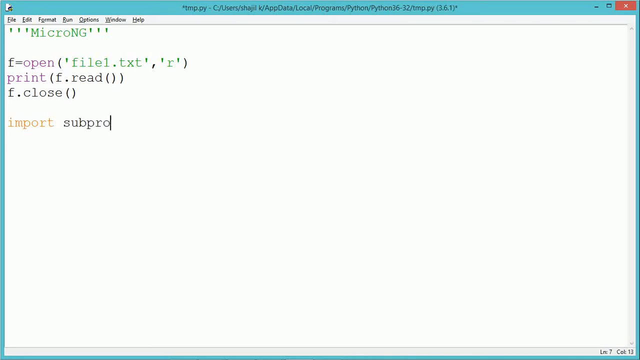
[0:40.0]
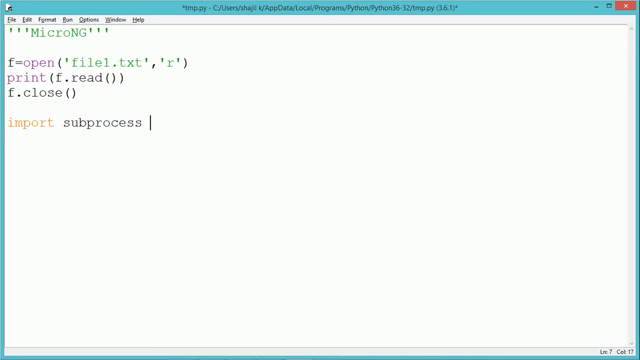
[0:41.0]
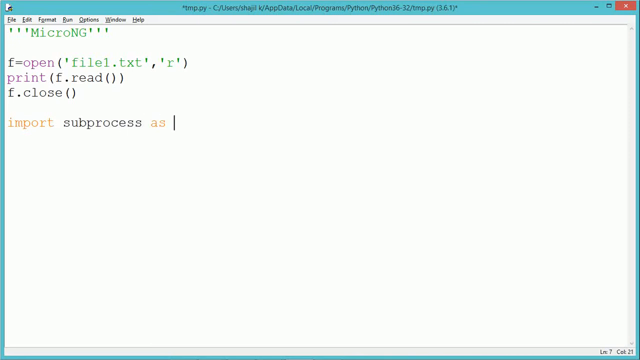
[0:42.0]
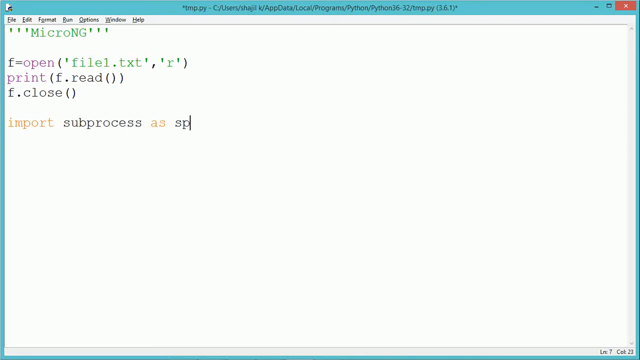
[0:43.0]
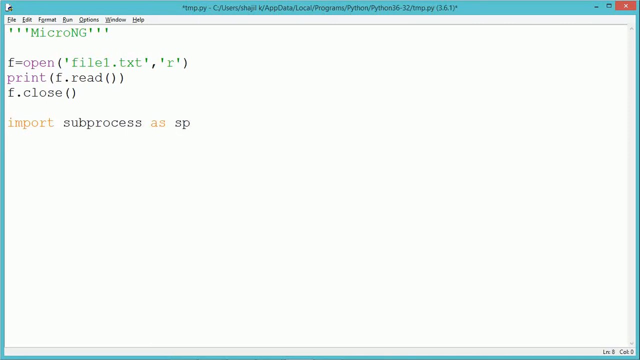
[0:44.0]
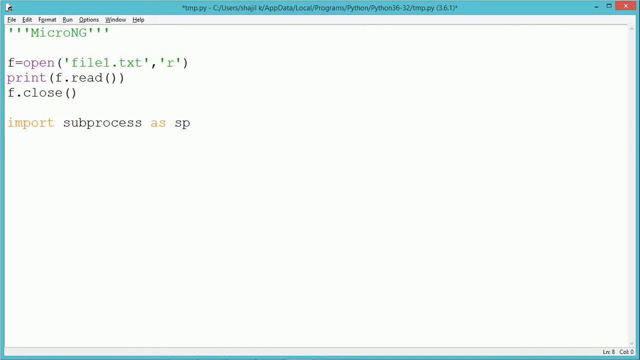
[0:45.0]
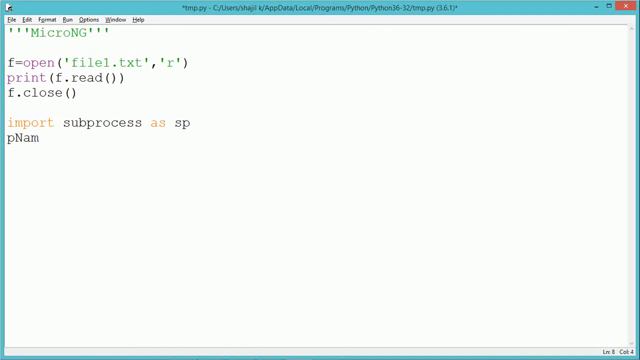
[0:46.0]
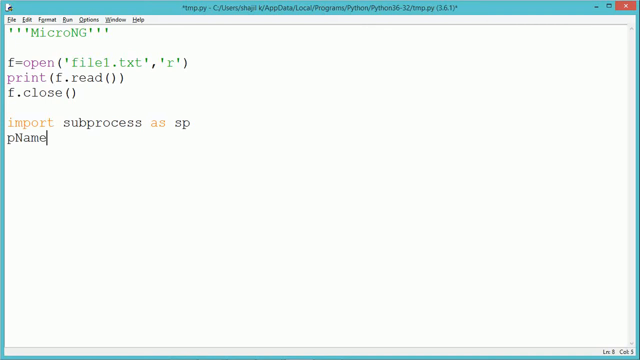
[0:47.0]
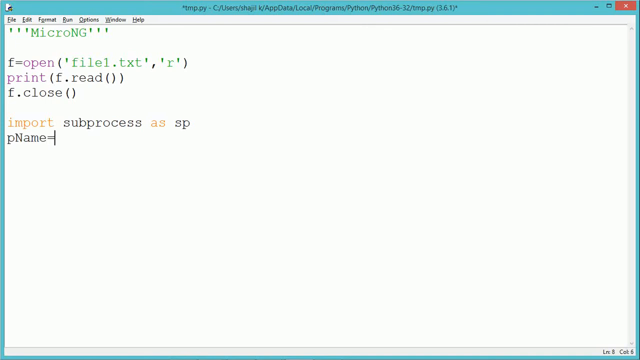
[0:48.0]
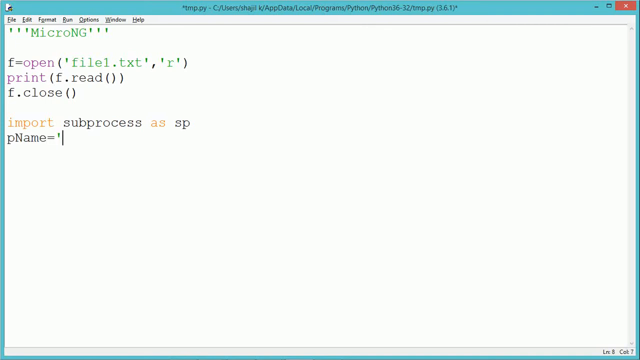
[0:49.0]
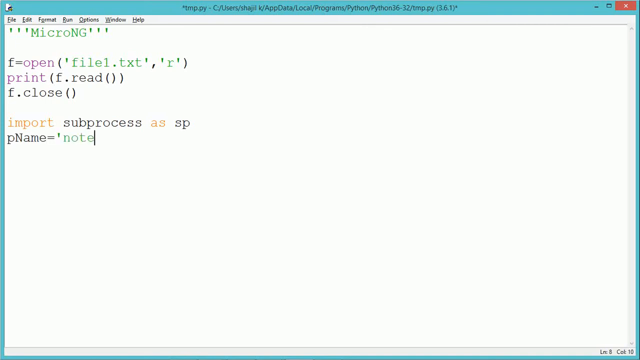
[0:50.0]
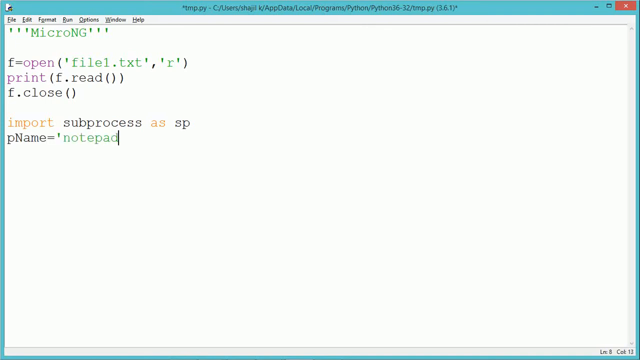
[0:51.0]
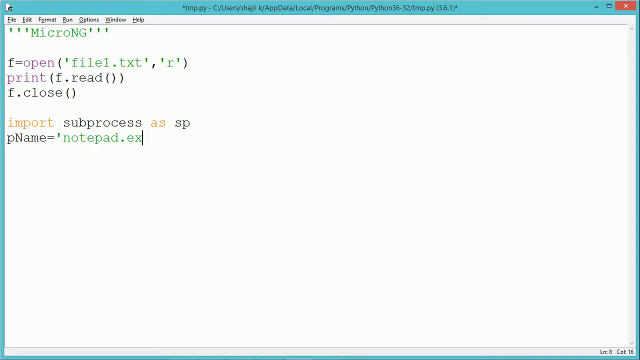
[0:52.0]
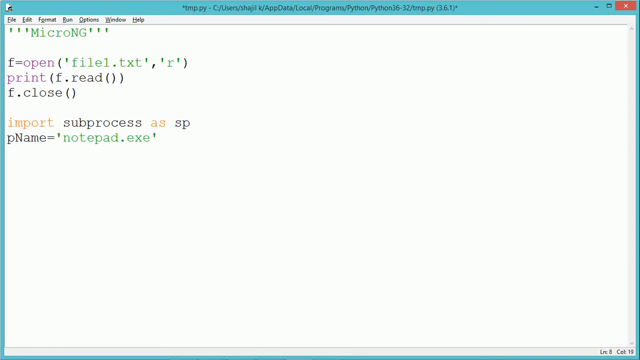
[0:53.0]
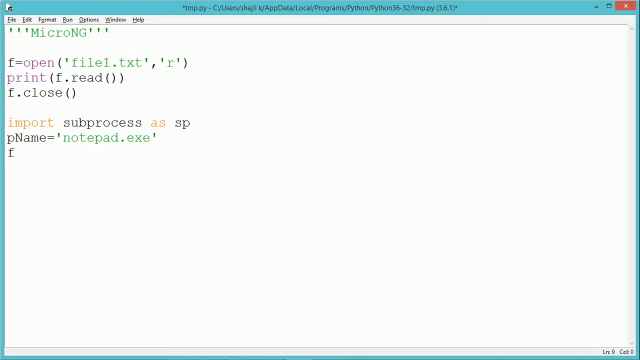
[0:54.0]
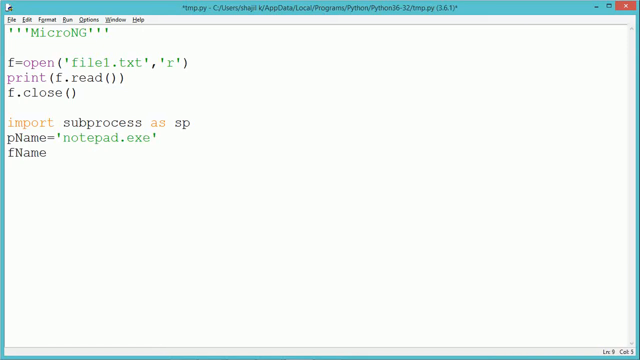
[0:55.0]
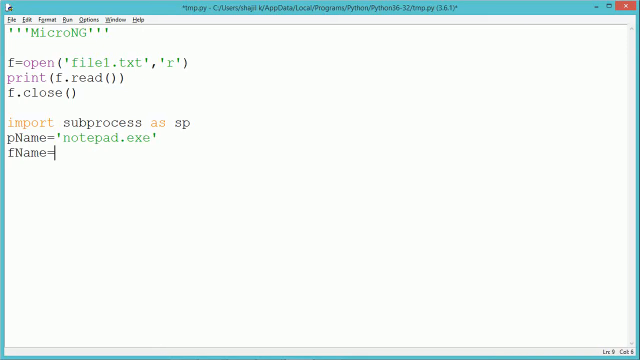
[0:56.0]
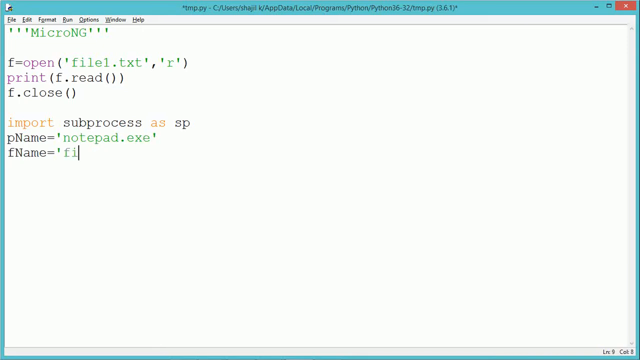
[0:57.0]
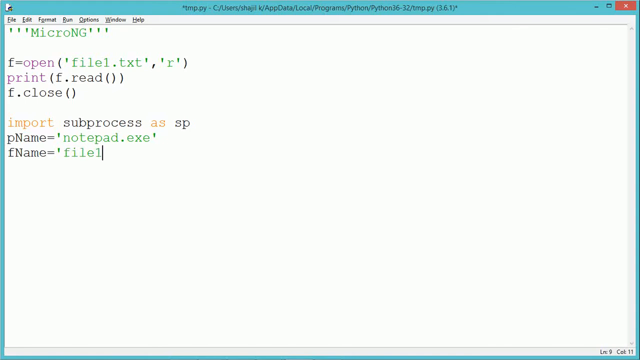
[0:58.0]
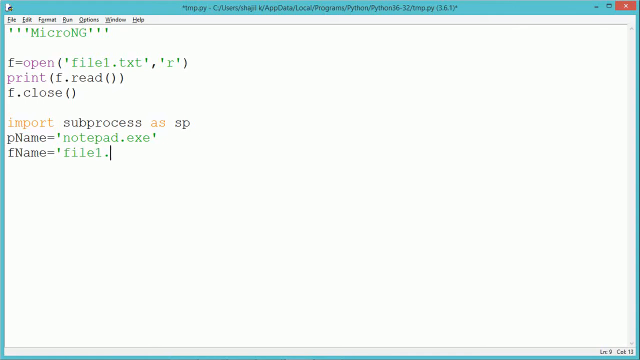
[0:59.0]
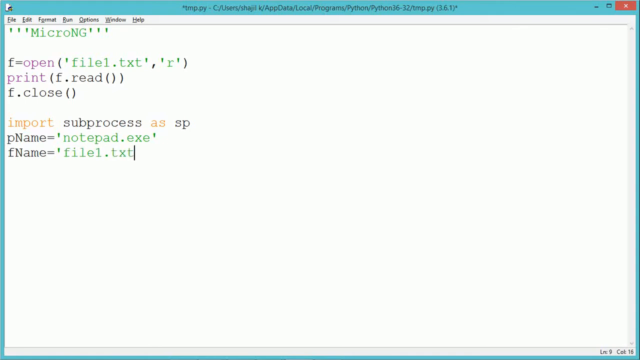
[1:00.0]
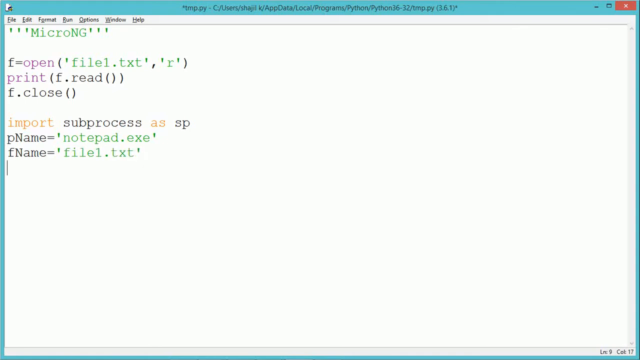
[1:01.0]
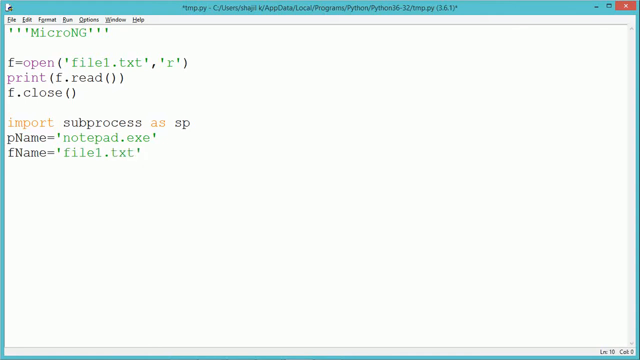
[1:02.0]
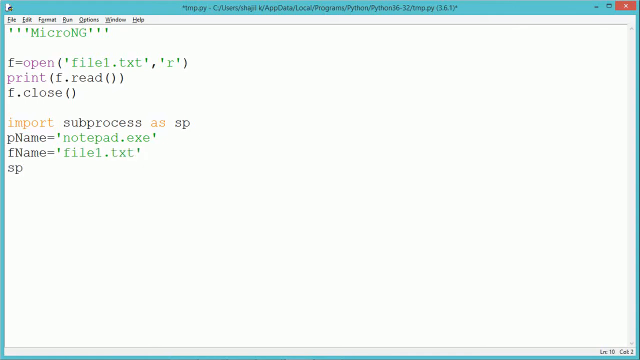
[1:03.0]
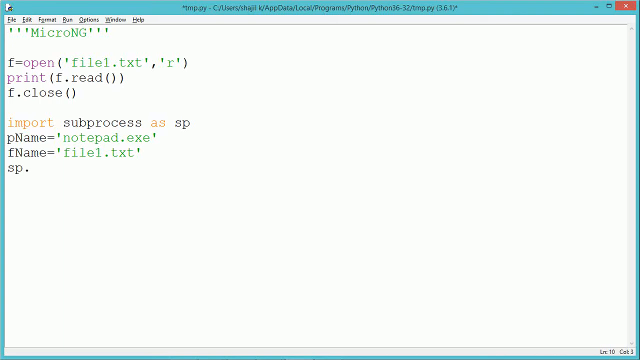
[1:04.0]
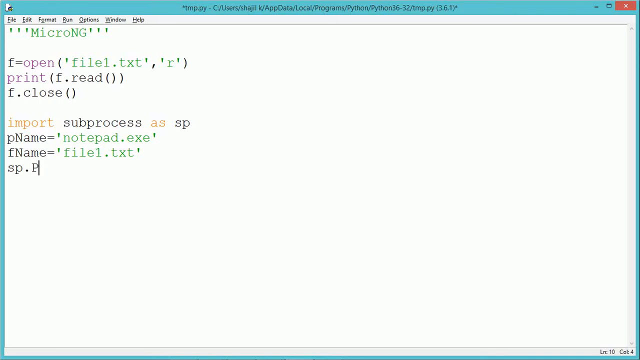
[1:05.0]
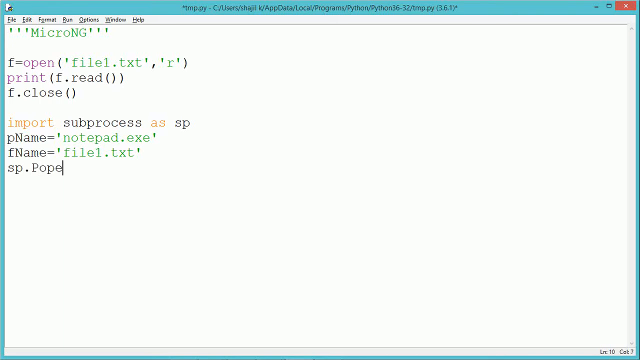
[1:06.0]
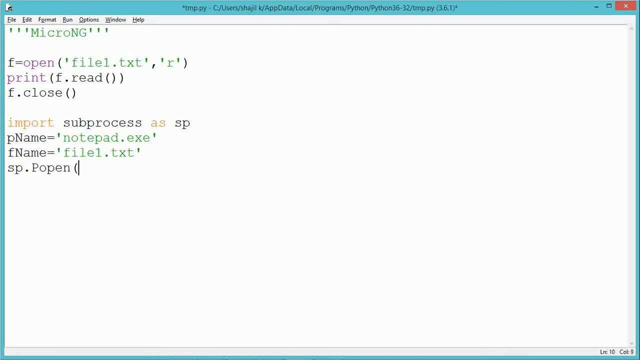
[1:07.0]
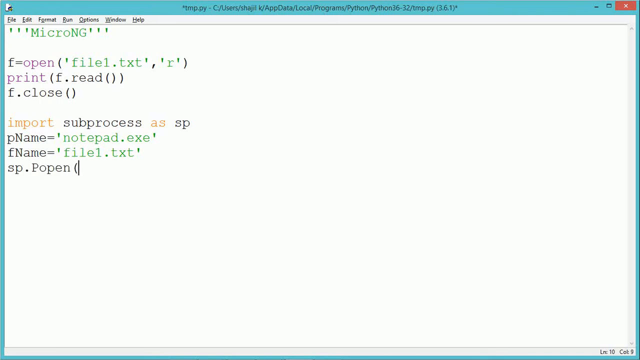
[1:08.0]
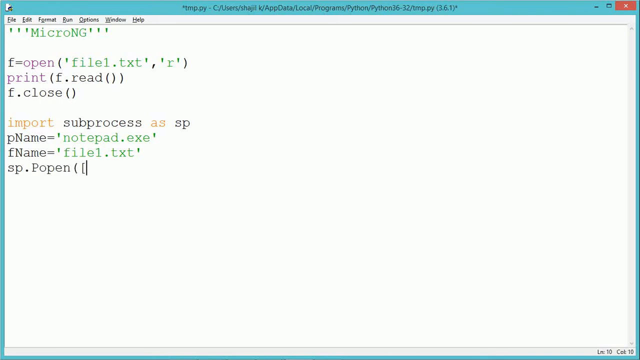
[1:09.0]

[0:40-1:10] The code continues with a line reading "import subprocess as sp". A variable pname is assigned "notepad.exe", the Notepad application, and a variable fname is assigned "file1.txt", the file opened in the first section of the code with the variable f, the print f.read command and f.close. Another line, sp.popen, is then entered.